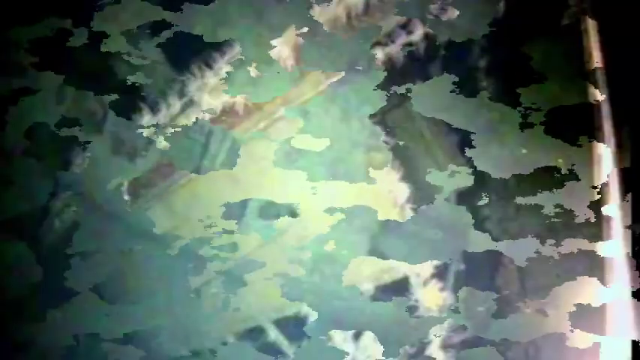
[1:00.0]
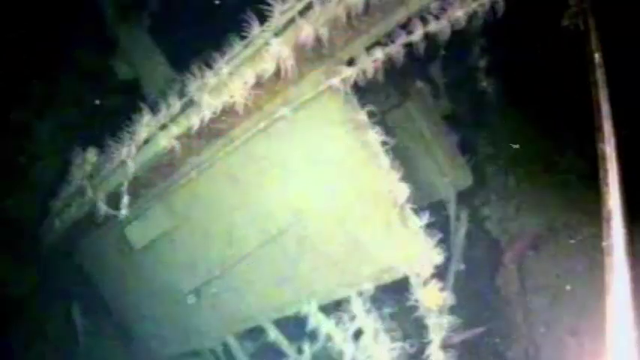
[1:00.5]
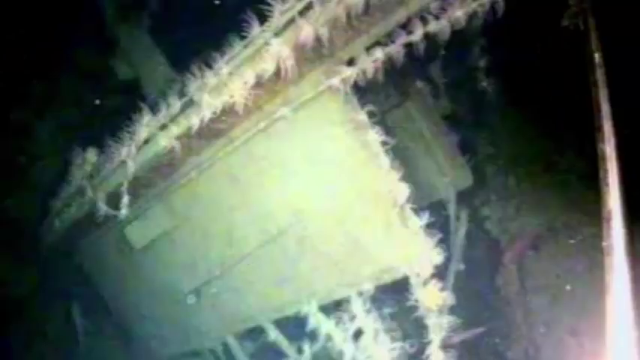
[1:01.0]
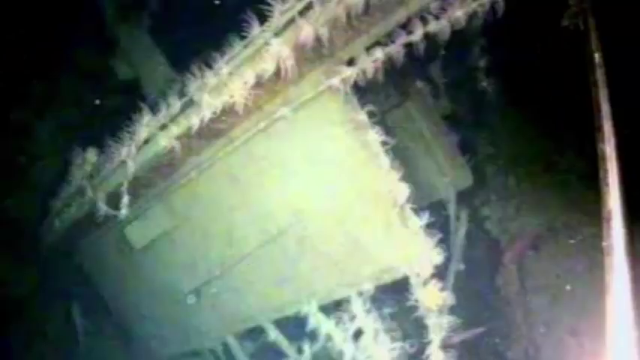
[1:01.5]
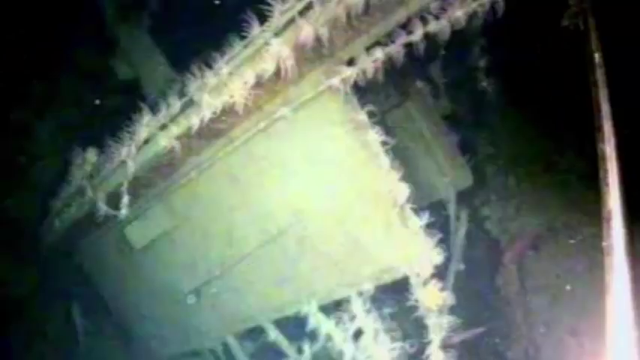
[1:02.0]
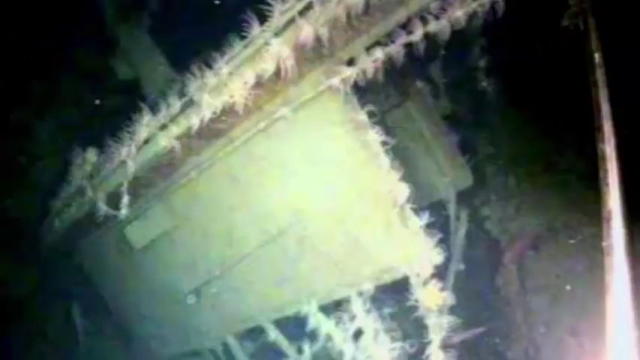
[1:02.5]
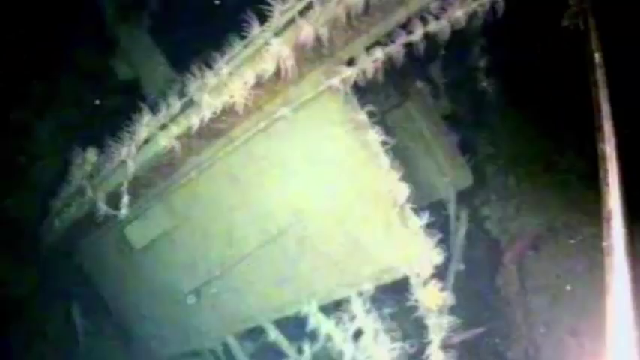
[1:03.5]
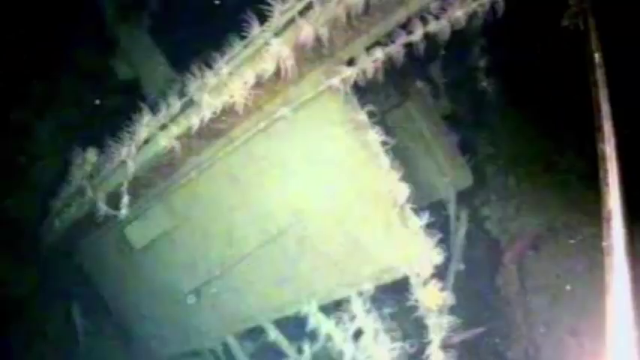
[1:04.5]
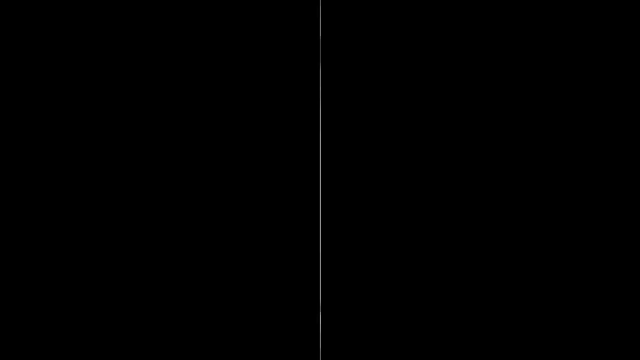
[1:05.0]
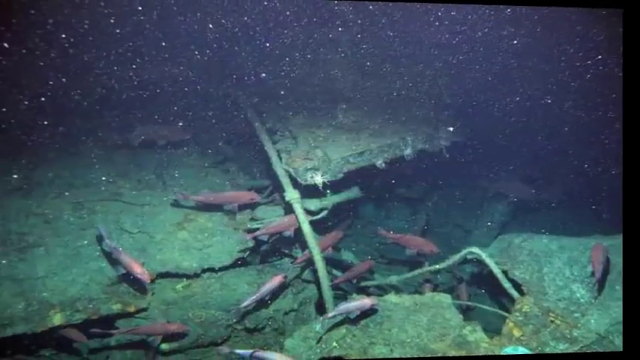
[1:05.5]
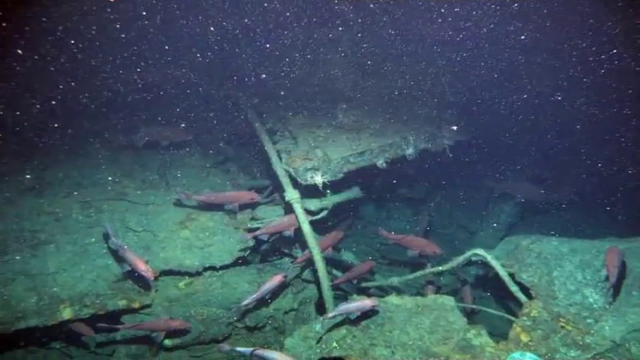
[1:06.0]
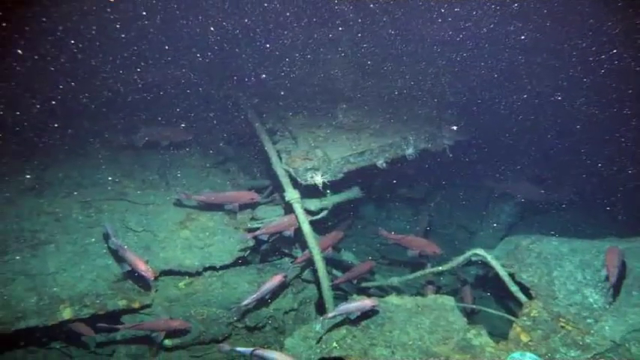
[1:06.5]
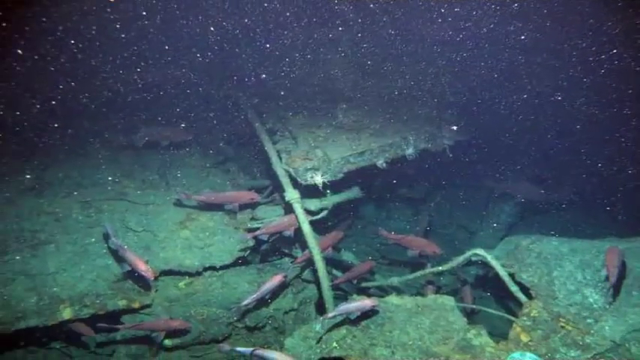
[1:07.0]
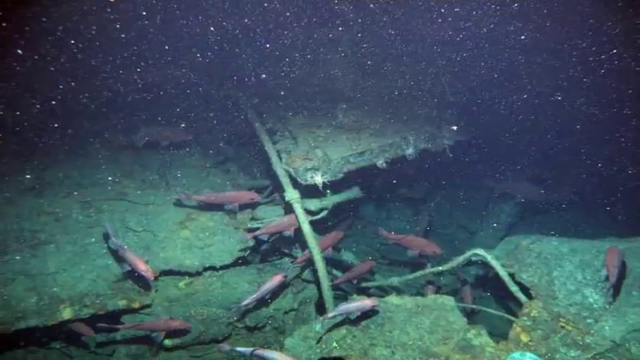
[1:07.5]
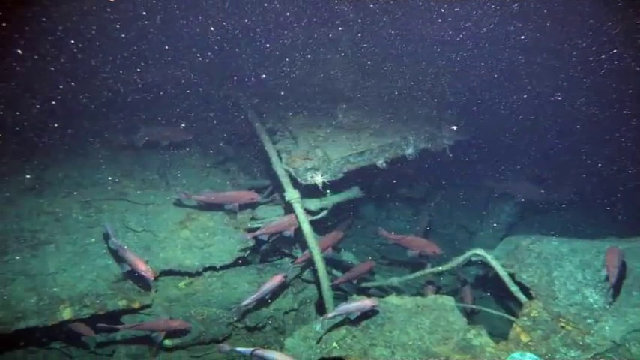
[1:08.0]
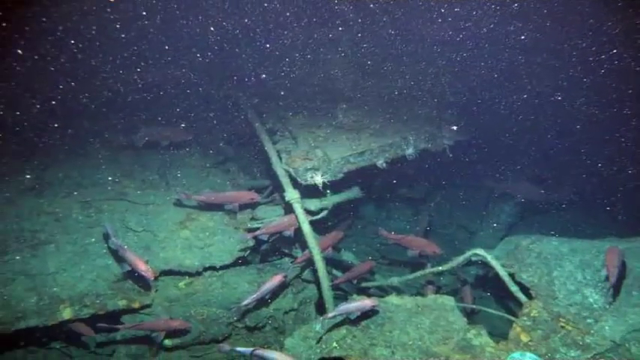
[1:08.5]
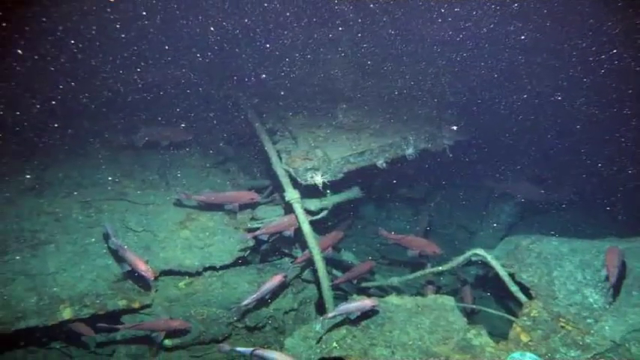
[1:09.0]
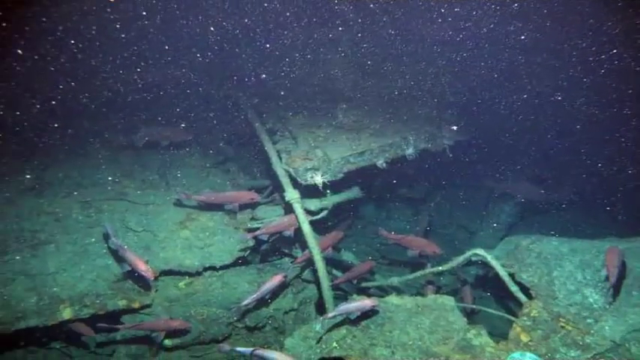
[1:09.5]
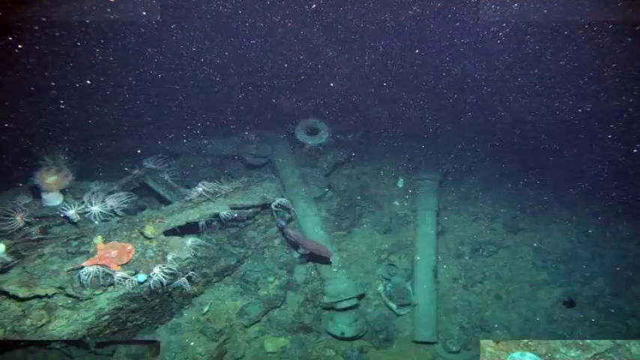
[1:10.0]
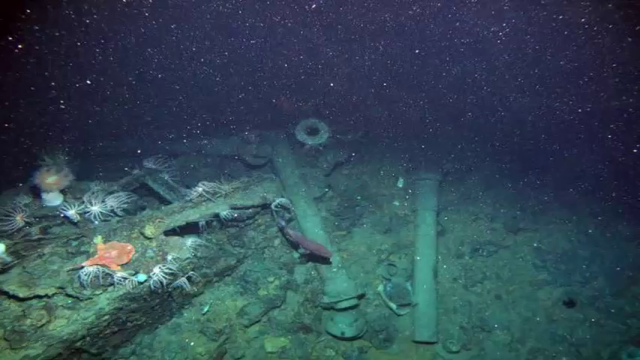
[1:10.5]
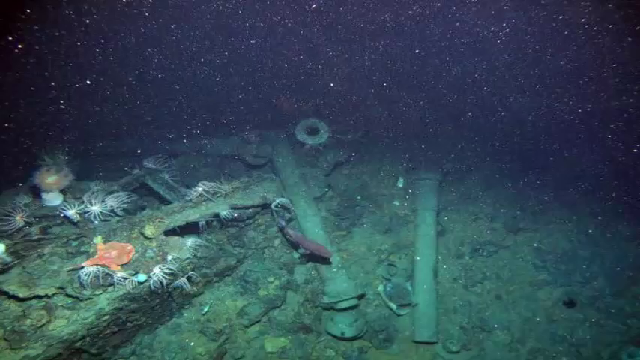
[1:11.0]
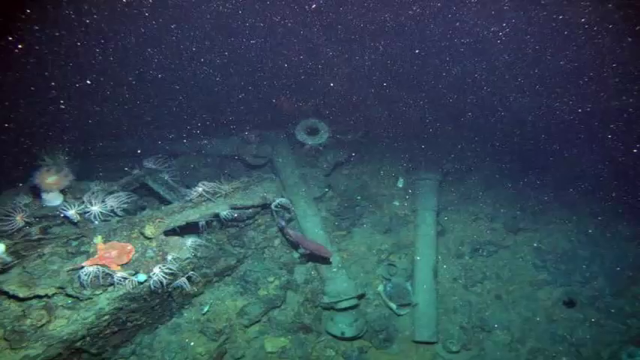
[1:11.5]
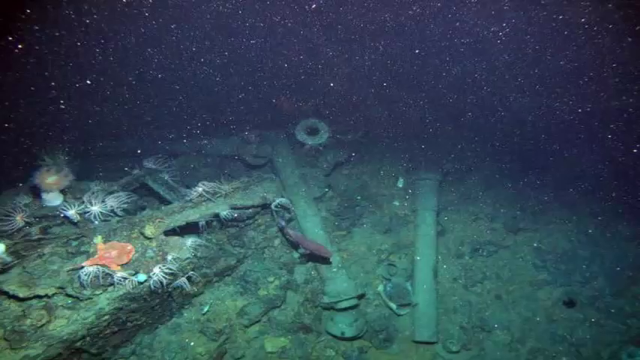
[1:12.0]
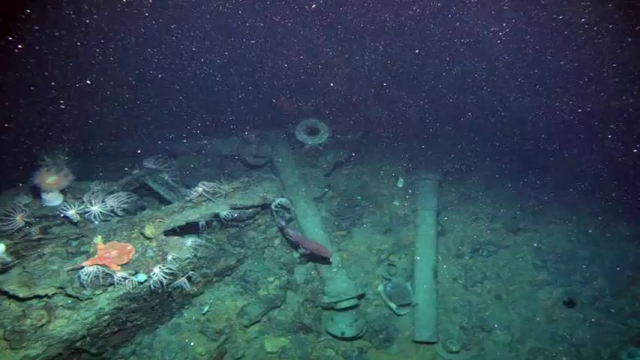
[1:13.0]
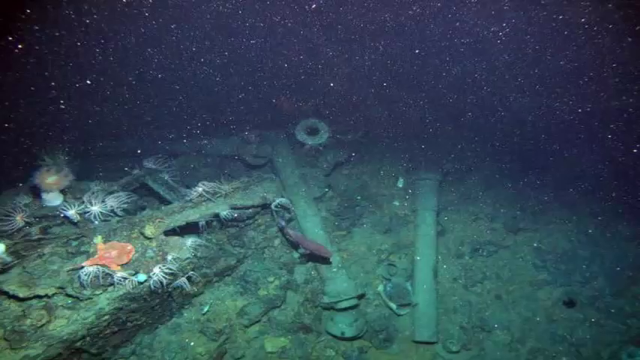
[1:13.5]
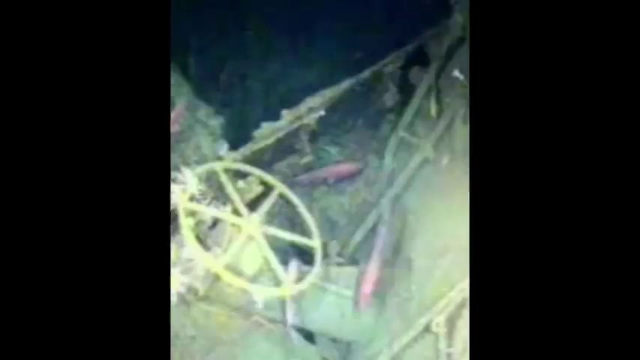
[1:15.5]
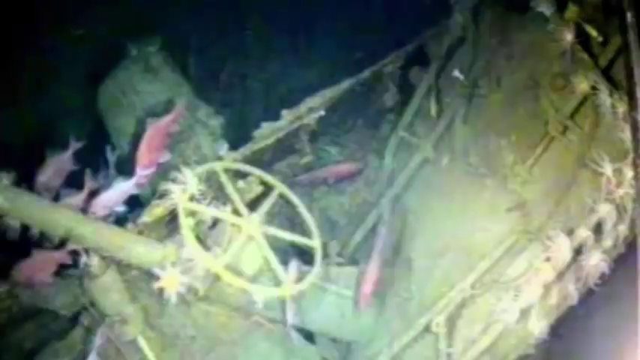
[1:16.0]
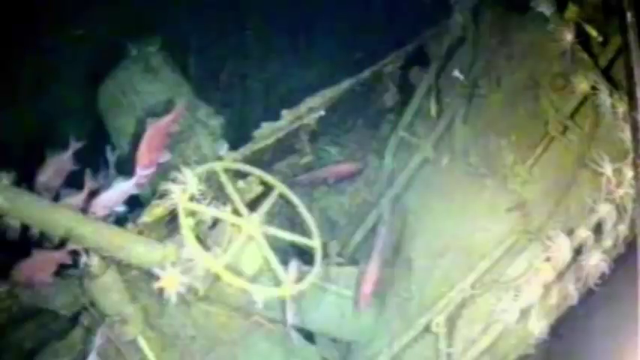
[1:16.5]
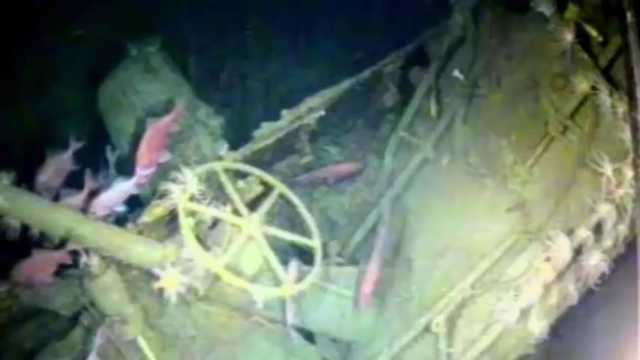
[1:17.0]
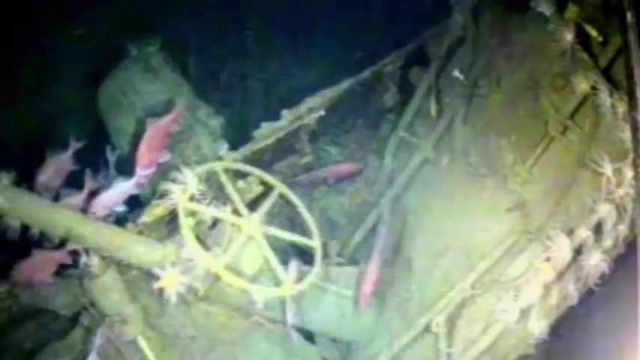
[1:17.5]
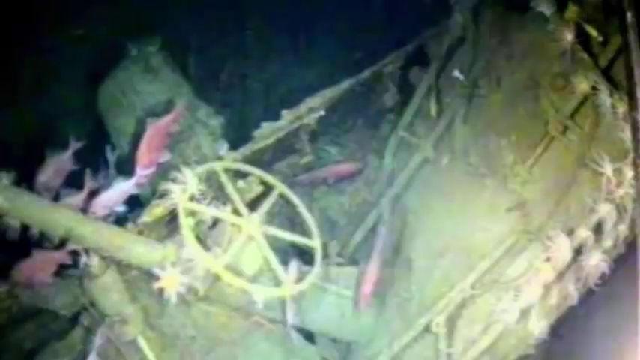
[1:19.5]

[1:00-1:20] An image shows vertical lines running from approximately the center of the left border to the center of the top border. These are covered in white spider-like growth that sort of resembles feathers, and the growths cover the entire length of the ship as well as the poles and other parts; the organisms seem to have grown over the entire ship. Fish swim in the background, and the back is very dark black where the light does not reach. The image is illuminated by some sort of underwater light source, with a green tint focused toward the center. A flip animation then shows another image of the wreckage with white dots or stars scattered all over the screen; the fish here are dark red with black accents, and a pole in the center of the screen is angled slightly toward the left. Barnacle growths are visible, and the background is very dark. The screen transitions to a different view of metal poles and supports, with white spider-shaped growths along the left side of the screen, a red fish in the center, and a starburst-like effect over the entire image. The image then transitions back to the upward view of the boat with the steering wheel and fish swimming around.